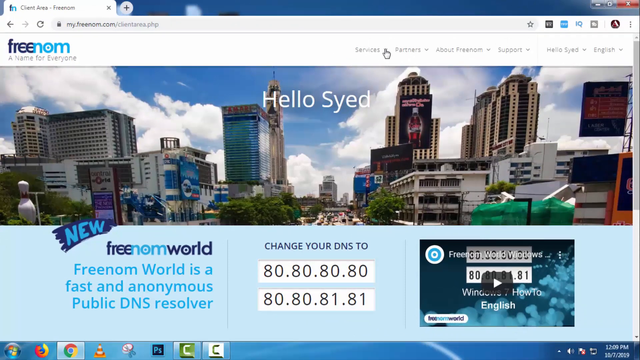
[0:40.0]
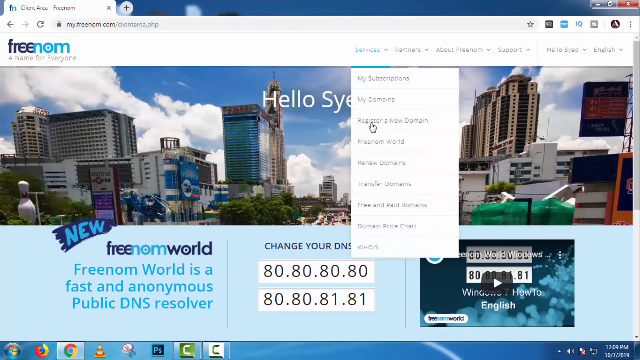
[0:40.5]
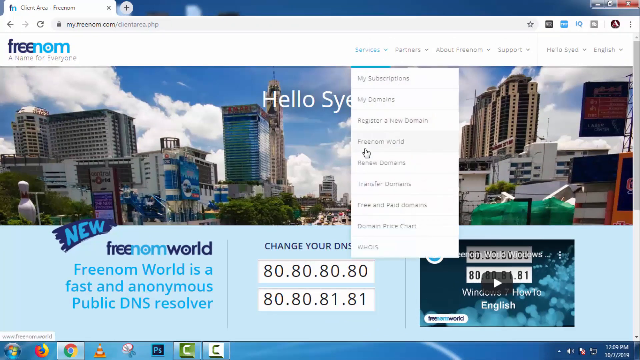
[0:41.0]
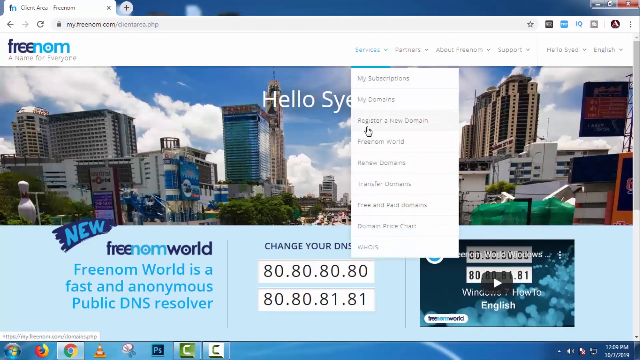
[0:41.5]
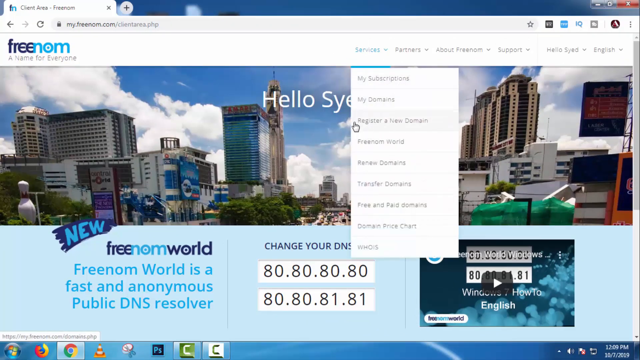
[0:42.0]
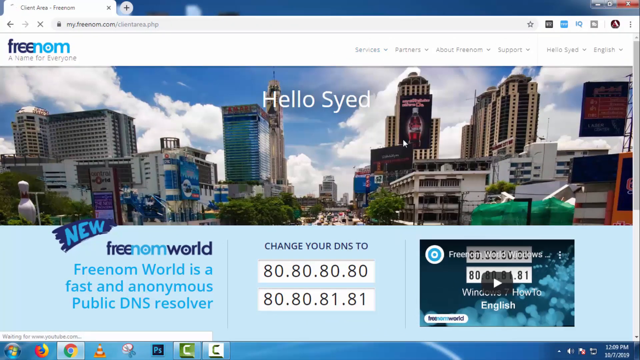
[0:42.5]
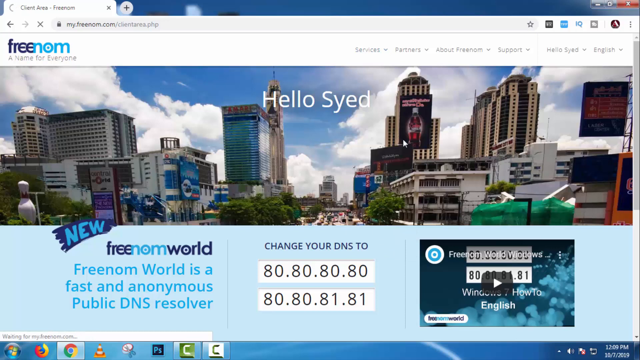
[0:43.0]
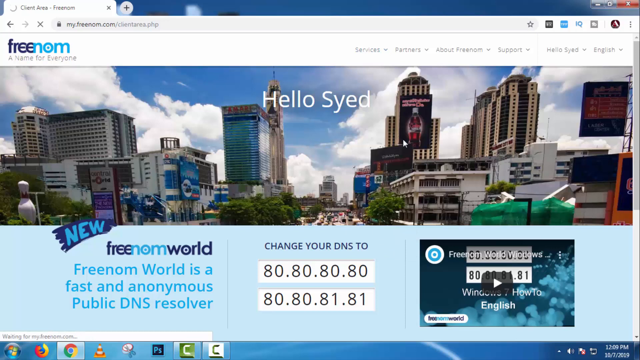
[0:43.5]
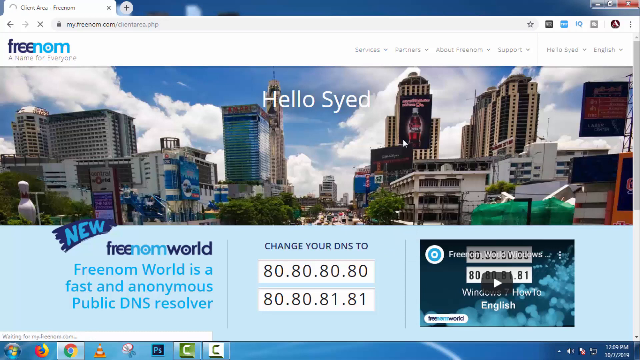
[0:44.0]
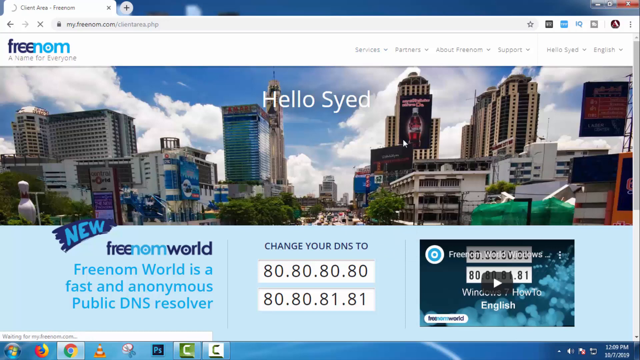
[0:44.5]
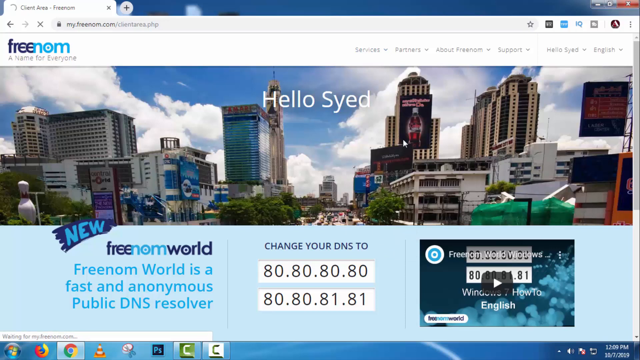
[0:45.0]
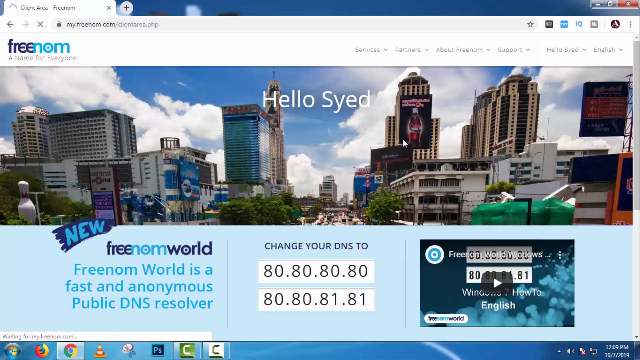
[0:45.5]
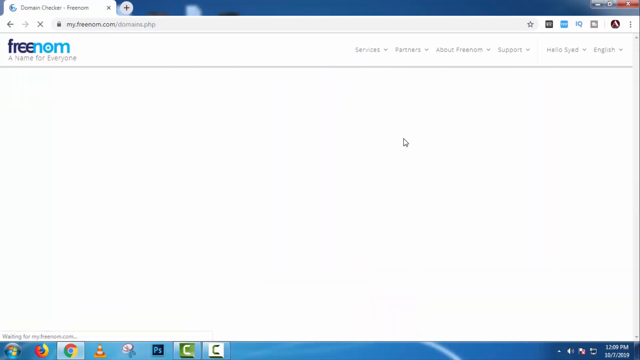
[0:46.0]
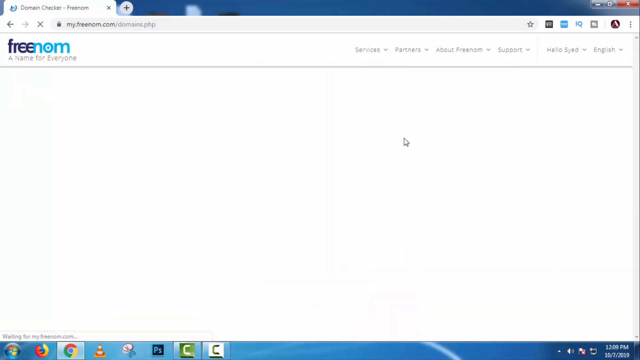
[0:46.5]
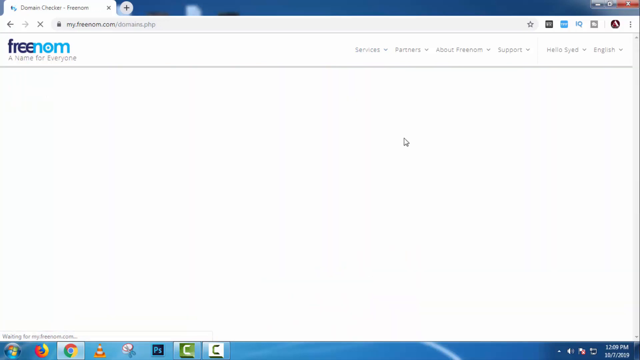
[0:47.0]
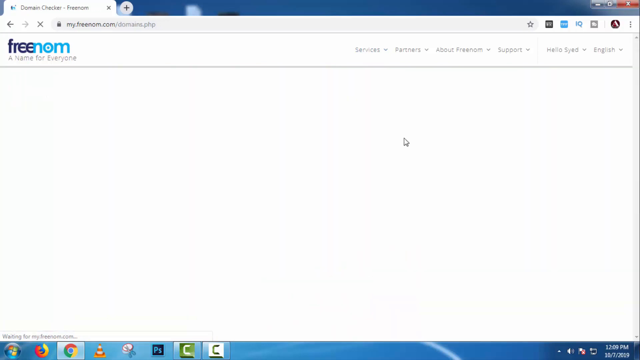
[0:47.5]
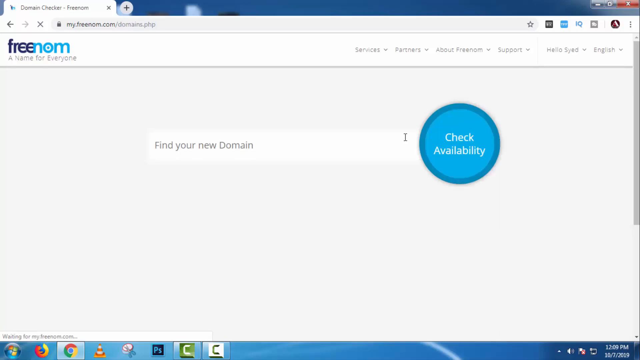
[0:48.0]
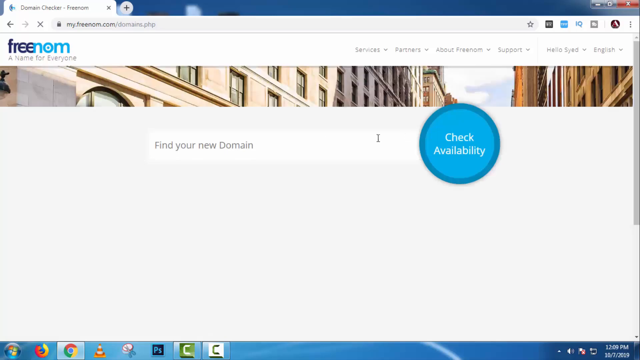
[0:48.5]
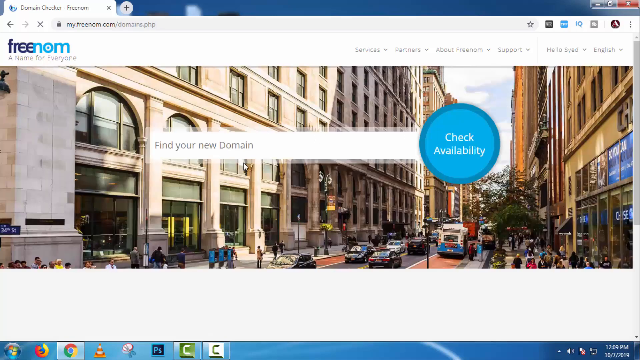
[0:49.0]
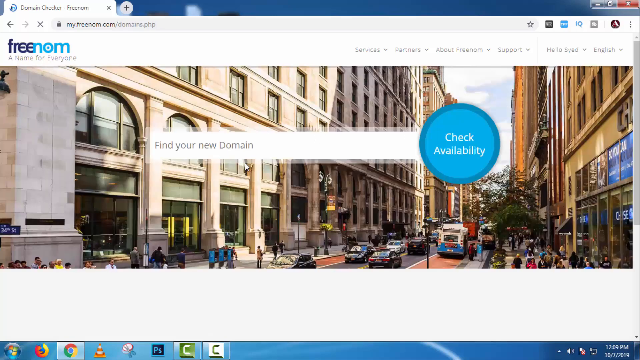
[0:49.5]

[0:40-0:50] The upper right part of the website is clicked, and a drop-down menu pops up with about 10 options. One of them is clicked, leading to a new window. A very large white search box reads "find your new domain," and to its right is a fairly large turquoise circle reading "check availability" in white text, apparently for checking whether a domain name is available. The search window and circle pop up first, and then the background photo flashes in behind them, as if taking a second to load. The photo shows an urban city street with lots of people, lots of cars and buildings on either side, kind of a New York City-type vibe. The Freenom logo is still in the upper left.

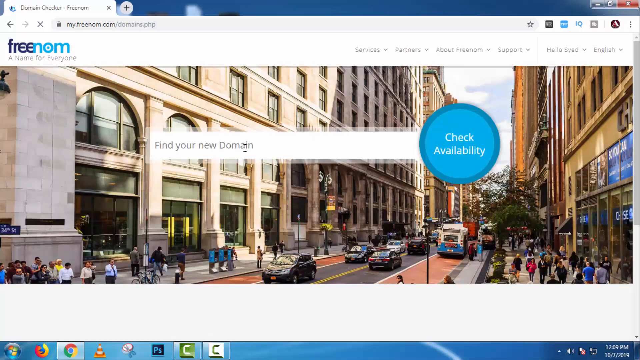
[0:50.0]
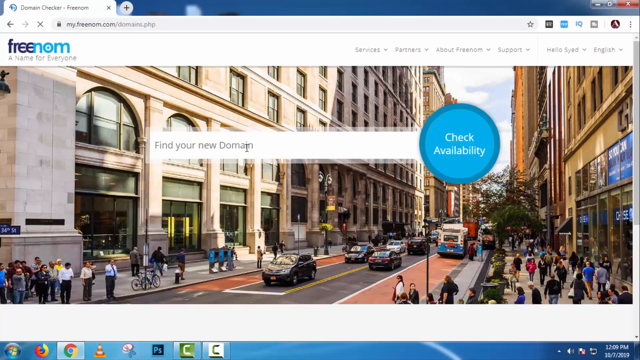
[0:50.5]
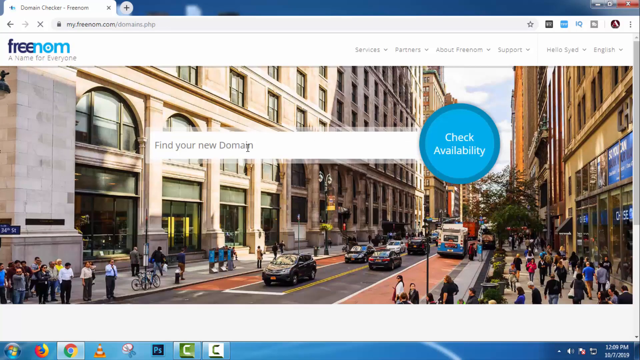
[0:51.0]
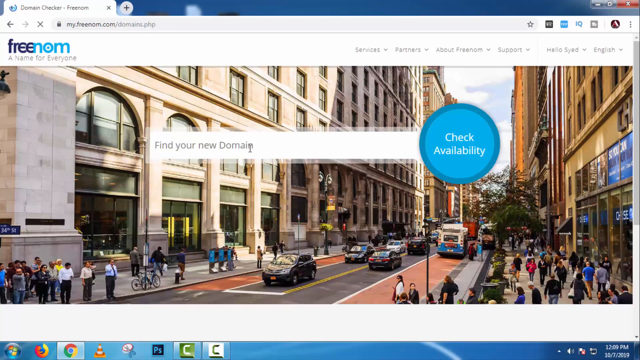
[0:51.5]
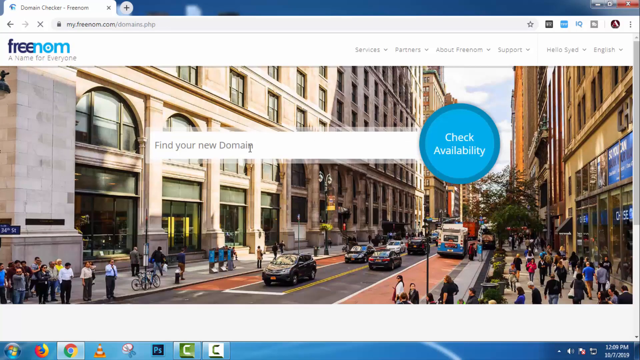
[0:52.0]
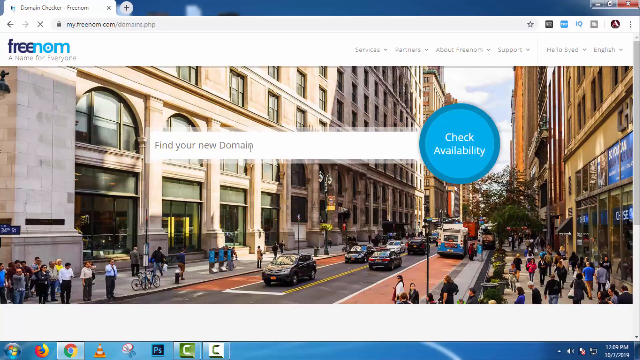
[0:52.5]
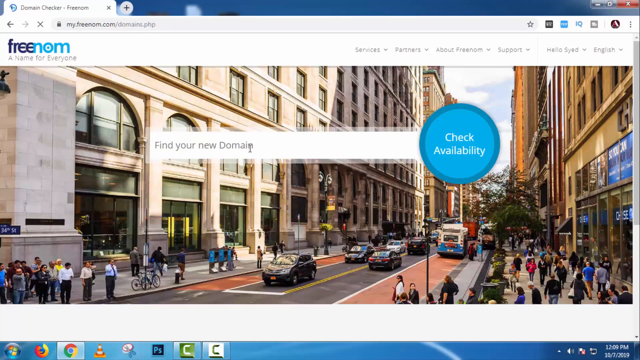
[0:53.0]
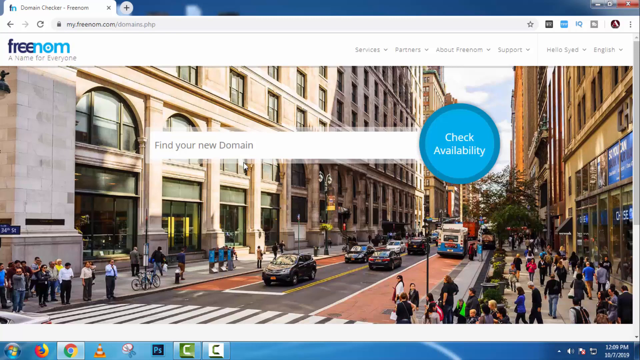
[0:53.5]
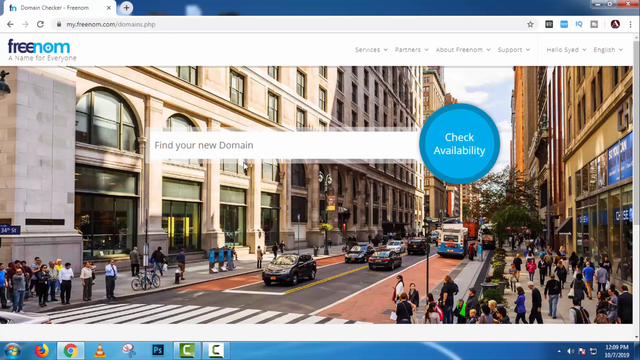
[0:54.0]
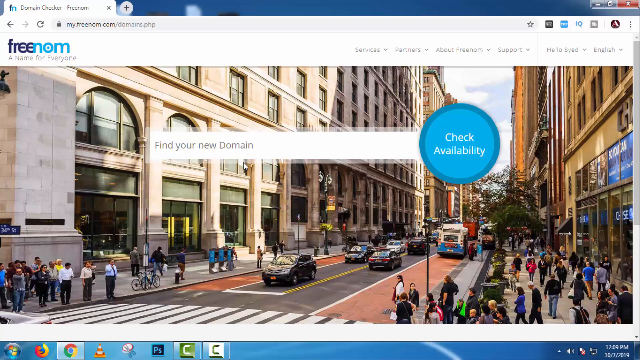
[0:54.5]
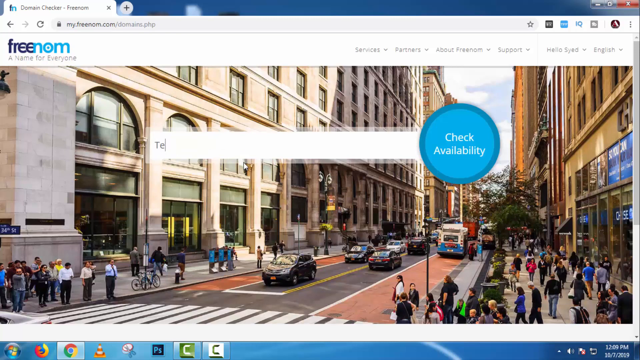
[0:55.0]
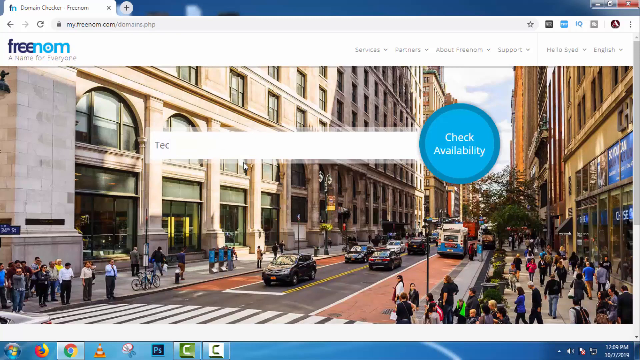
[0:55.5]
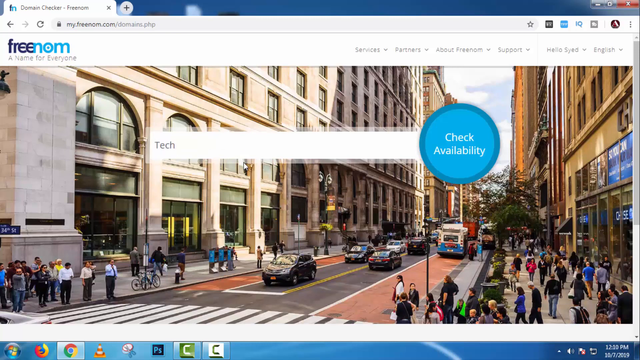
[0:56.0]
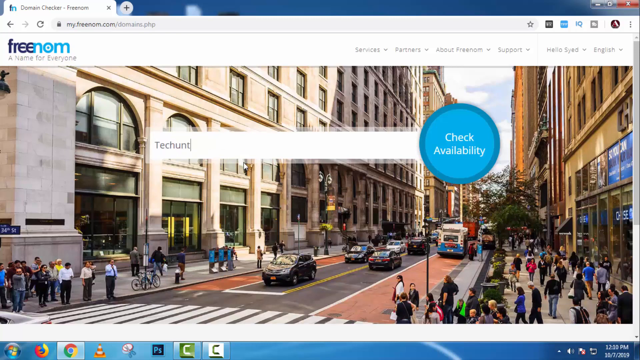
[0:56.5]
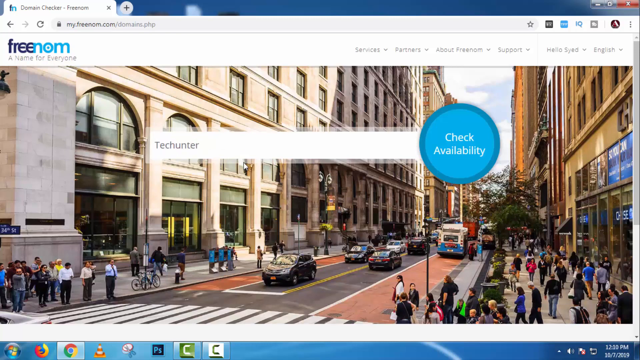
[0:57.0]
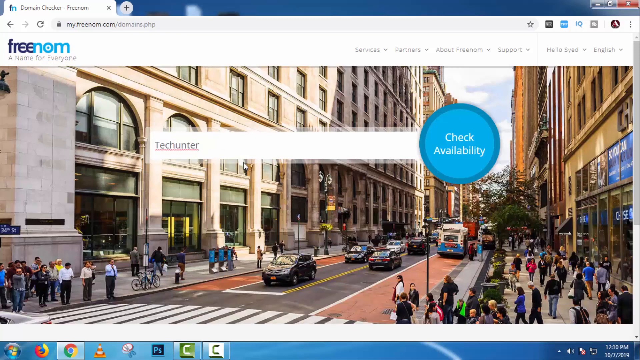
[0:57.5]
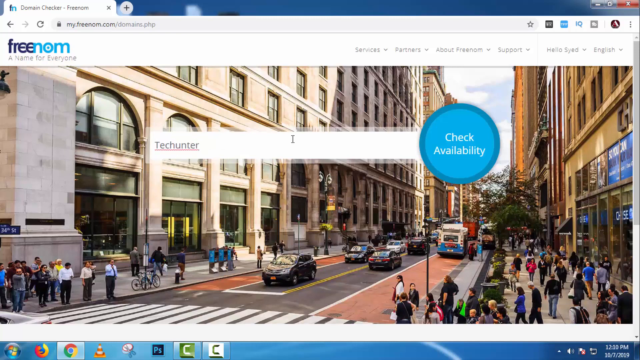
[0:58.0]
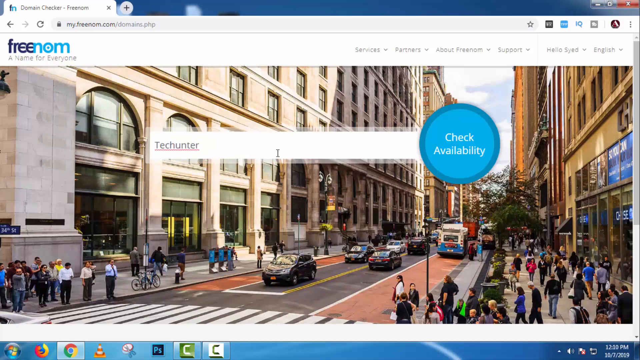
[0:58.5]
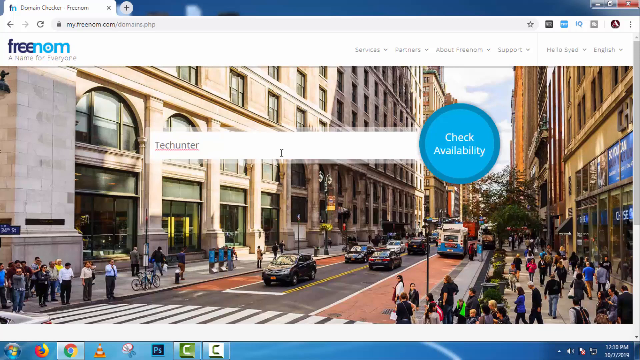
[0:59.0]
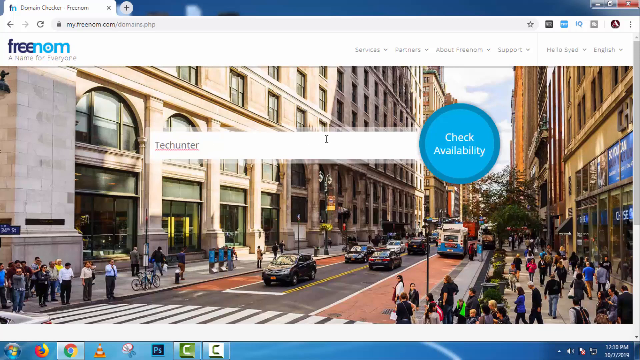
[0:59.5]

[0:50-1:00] "Techhunter" is typed into the search bar as one word with a capital T. The large circle to the right is connected to the search bar, touching it, and is a little larger than the bar; it reads "Check Availability" over two lines, turquoise blue in the middle with a slightly darker blue rim. The cityscape is in the background, with a crosswalk in the foreground and people waiting to cross.